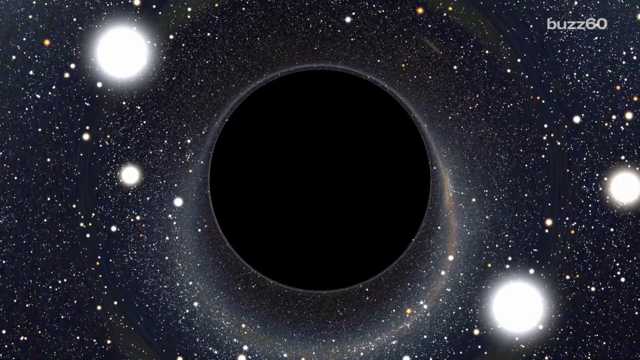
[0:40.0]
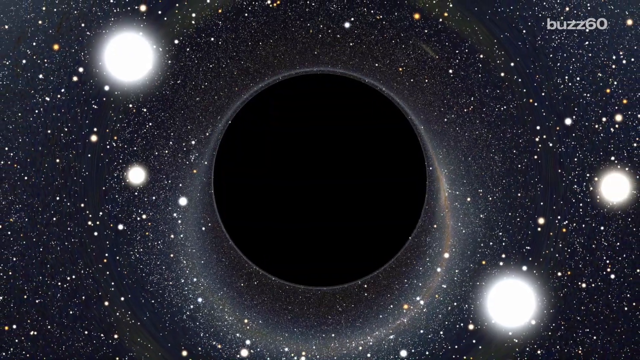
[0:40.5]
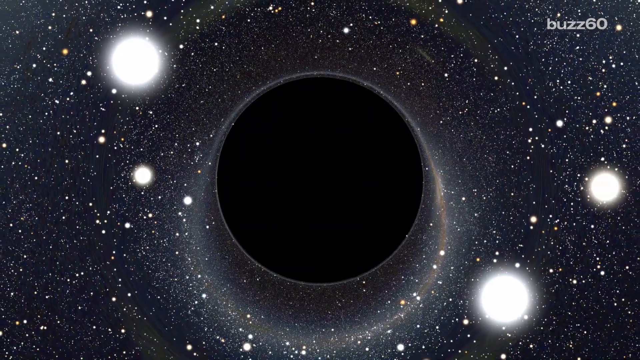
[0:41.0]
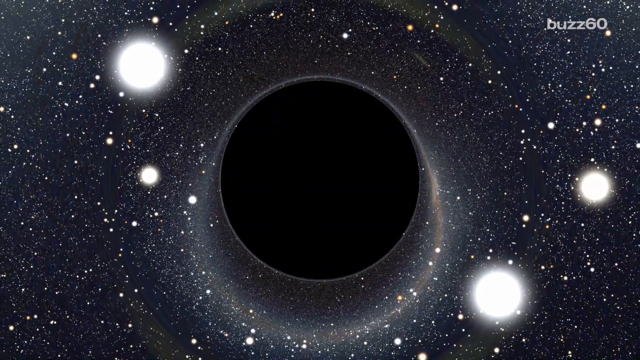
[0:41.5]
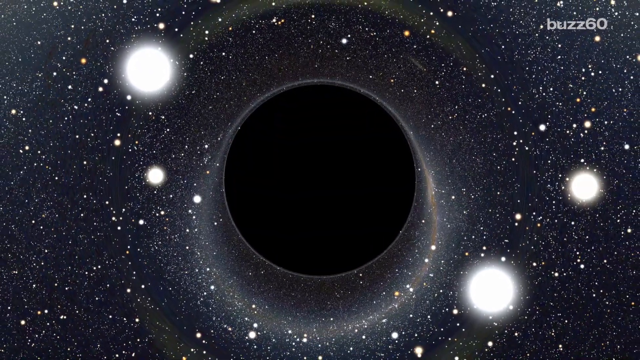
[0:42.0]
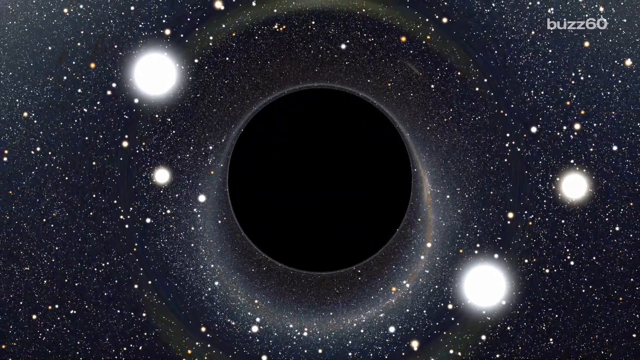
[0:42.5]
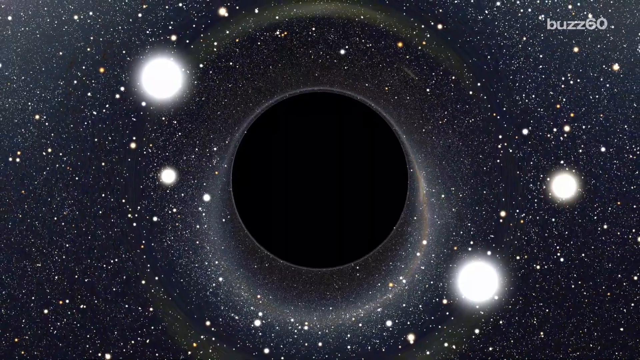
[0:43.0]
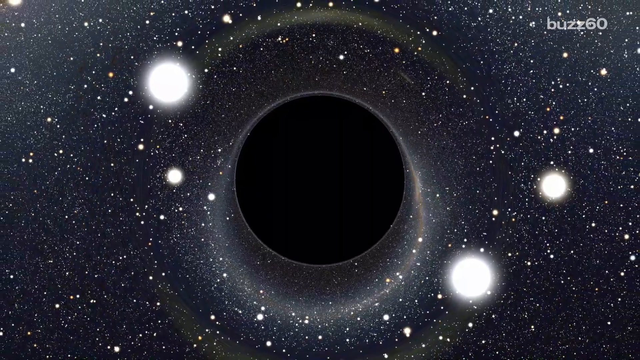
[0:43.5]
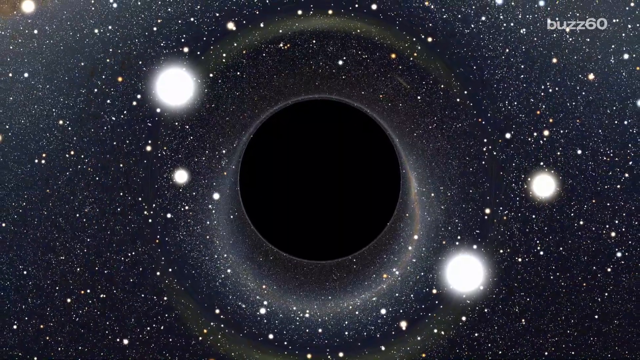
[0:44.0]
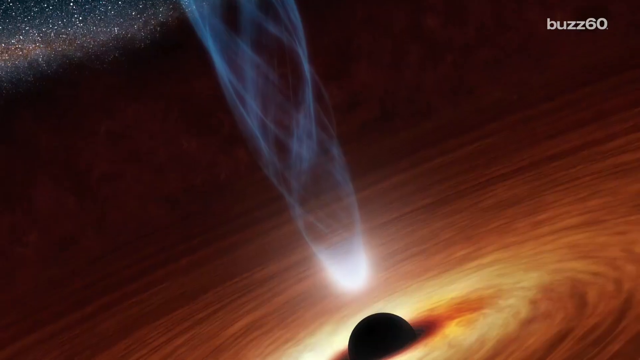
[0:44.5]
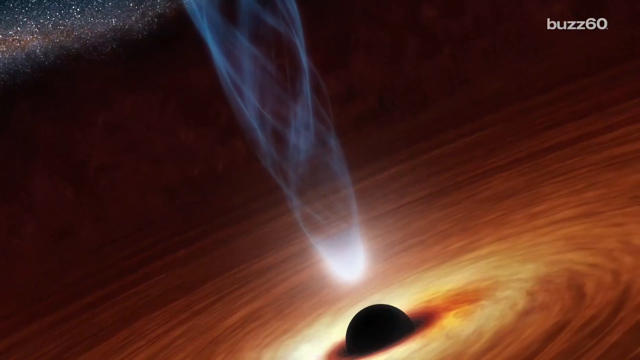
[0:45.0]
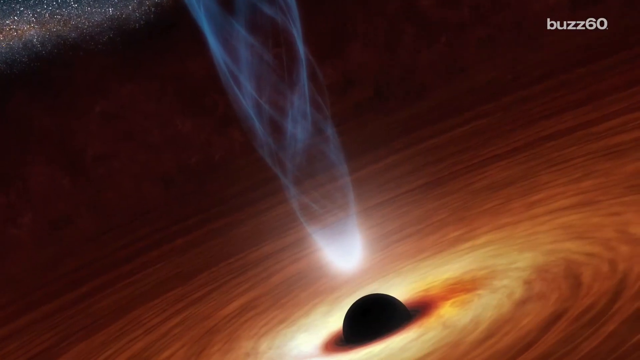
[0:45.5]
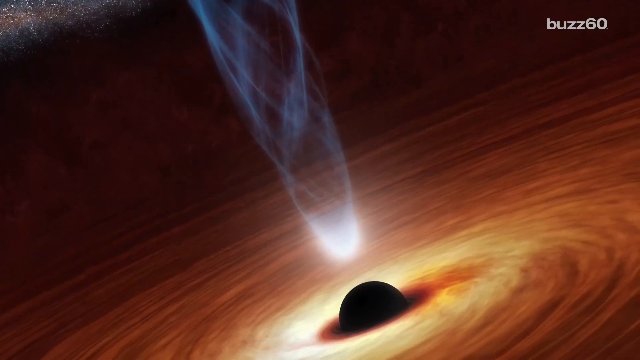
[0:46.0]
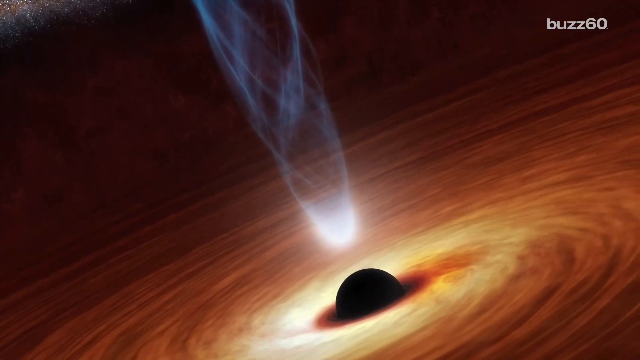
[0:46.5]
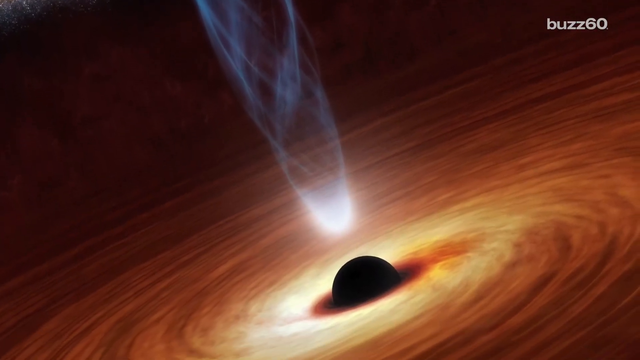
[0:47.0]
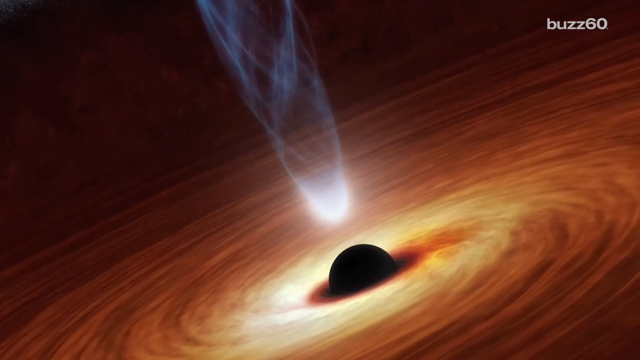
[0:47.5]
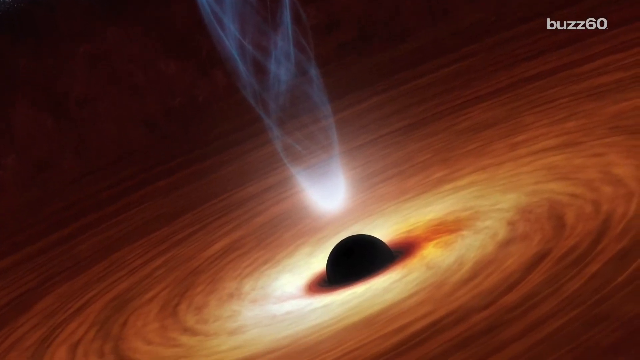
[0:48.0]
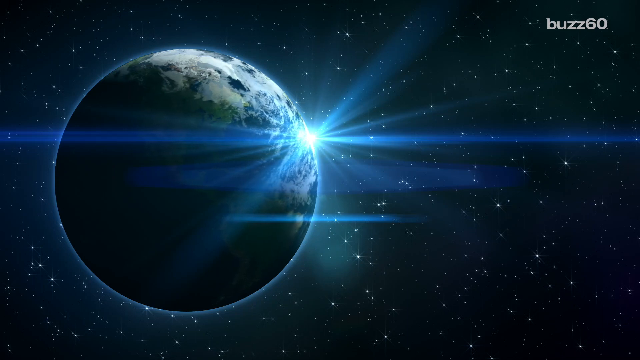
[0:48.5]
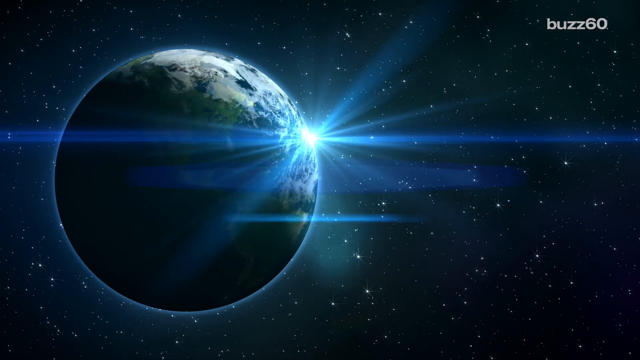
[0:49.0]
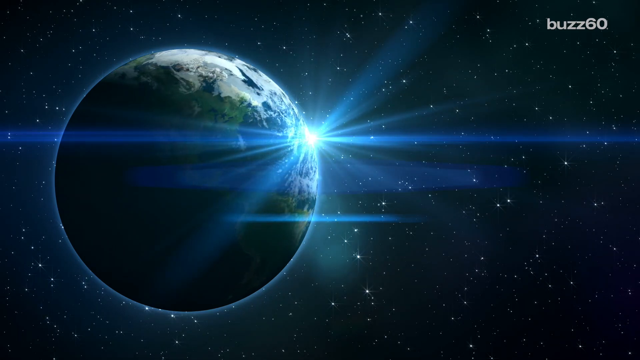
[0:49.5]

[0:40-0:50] The camera continues to zoom back from the shot of space with the perfect black circle in the middle of the screen and stars around it, including some large stars. A cut leads to what appears to be an illustration of a black hole, with the camera slowly panning down and to the right. It shows a black orb at the bottom middle of the screen surrounded by circling clouds swirling yellow and becoming more red the further they are from the central black orb. The plane of the phenomenon is angled from bottom left to upper right. White energy comes in from the top of the screen directly towards the black orb. The video then cuts to an animated shot in space showing the Earth rotating. The Earth occupies the left-hand side of the screen, and a bright light to the right of the Earth, just at its edge, creates a diffuse light, with blue lens flare spreading across the screen in various directions.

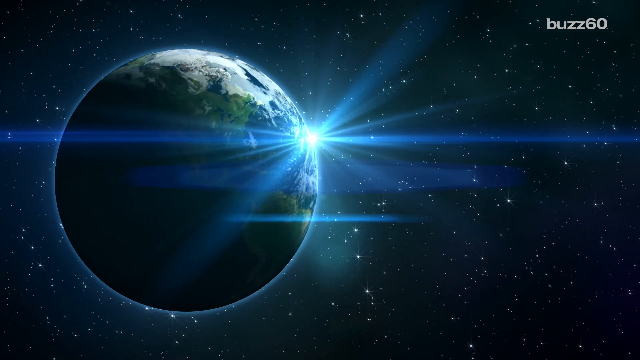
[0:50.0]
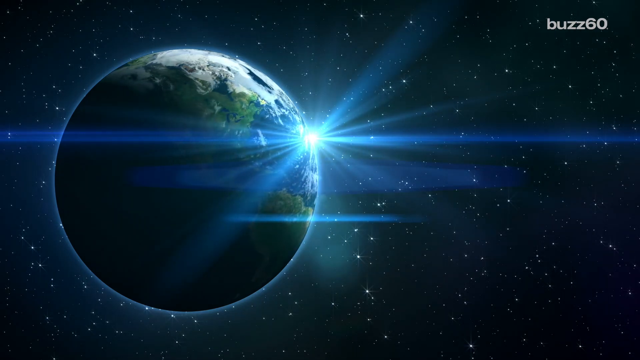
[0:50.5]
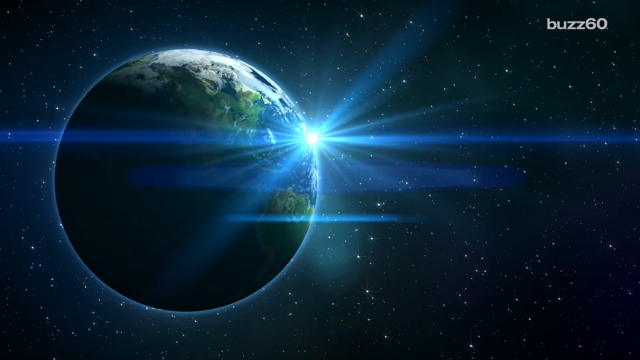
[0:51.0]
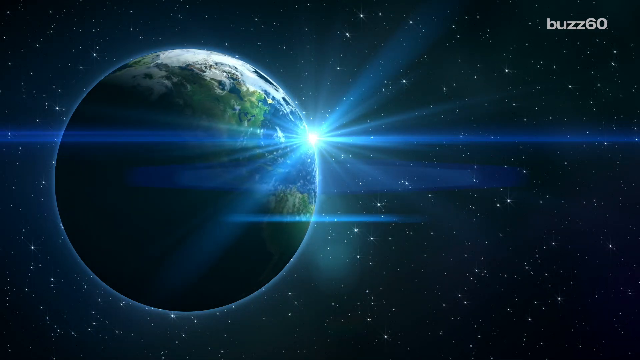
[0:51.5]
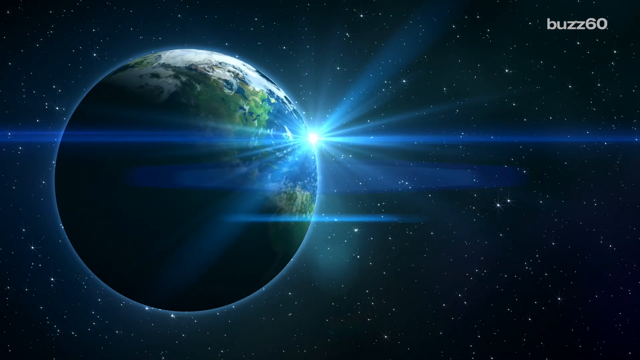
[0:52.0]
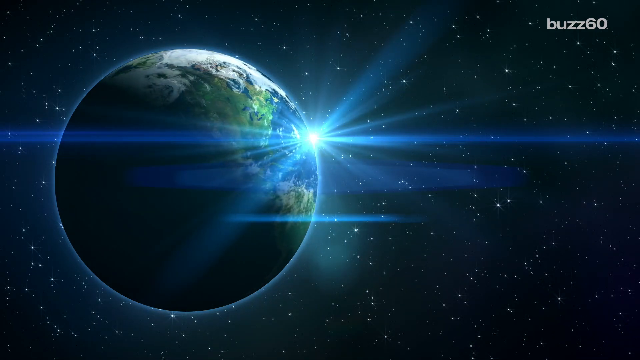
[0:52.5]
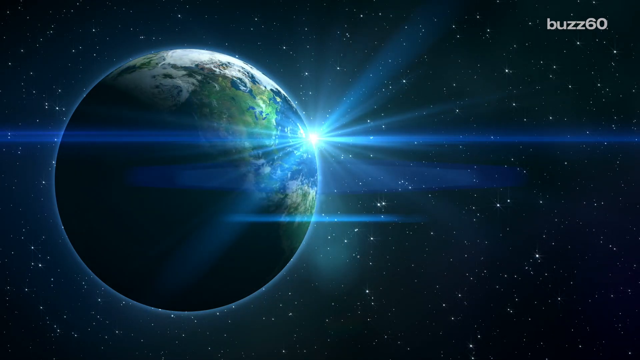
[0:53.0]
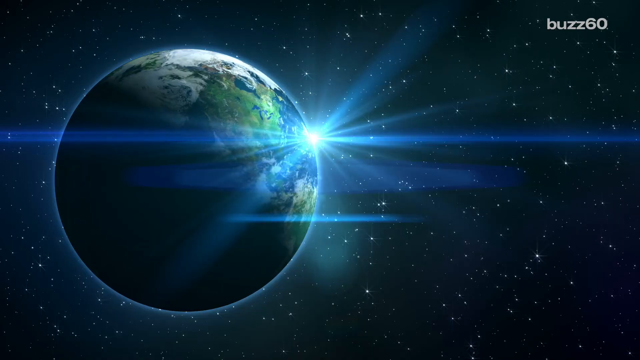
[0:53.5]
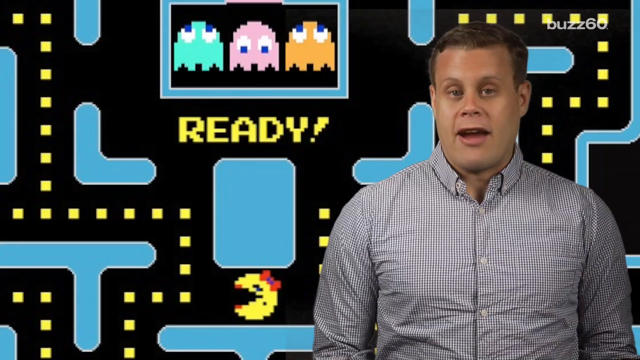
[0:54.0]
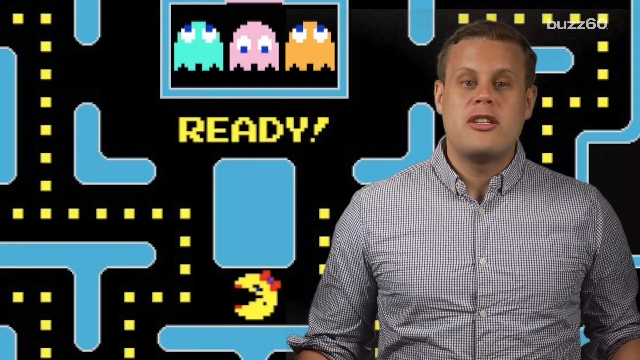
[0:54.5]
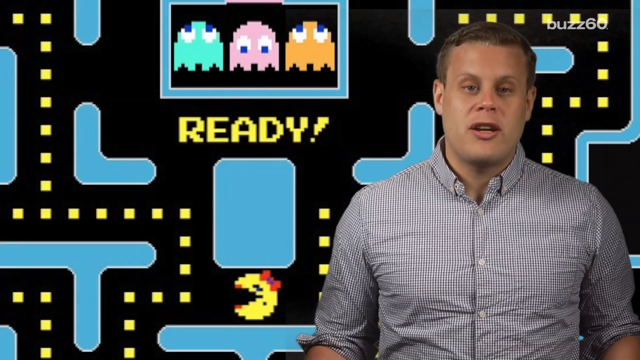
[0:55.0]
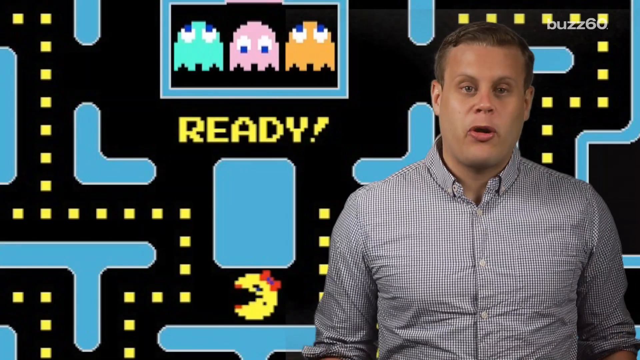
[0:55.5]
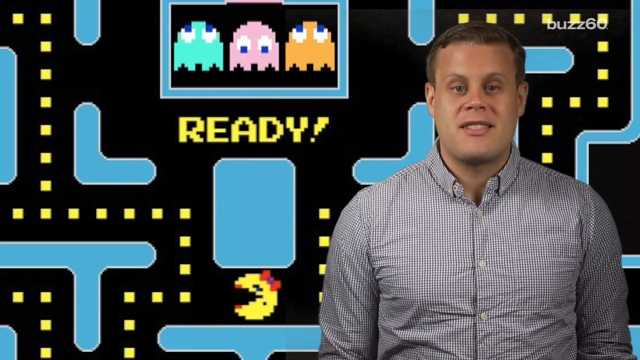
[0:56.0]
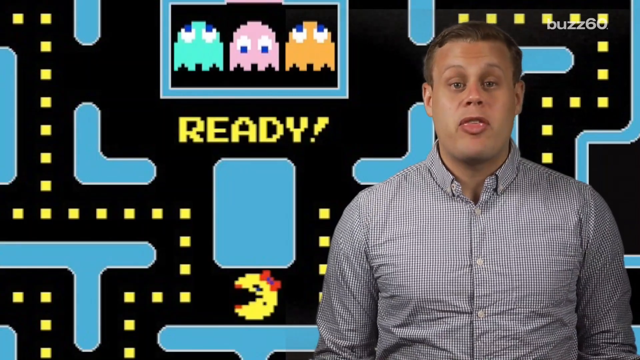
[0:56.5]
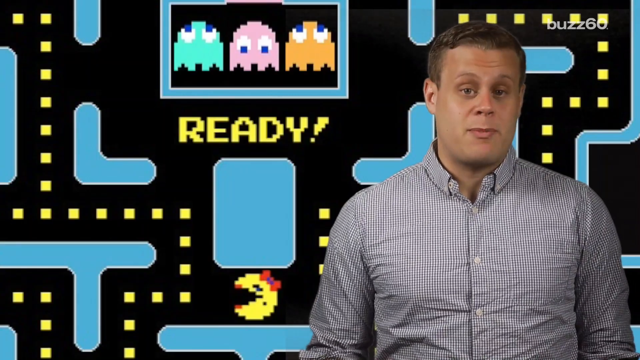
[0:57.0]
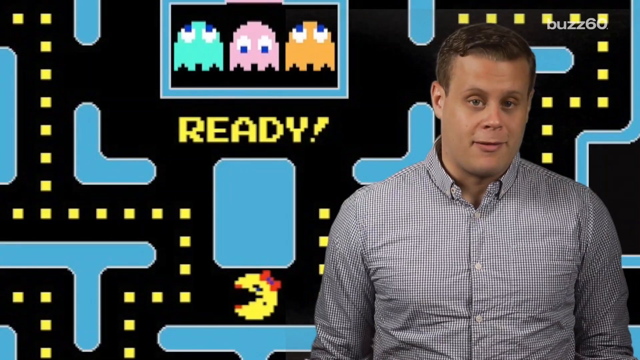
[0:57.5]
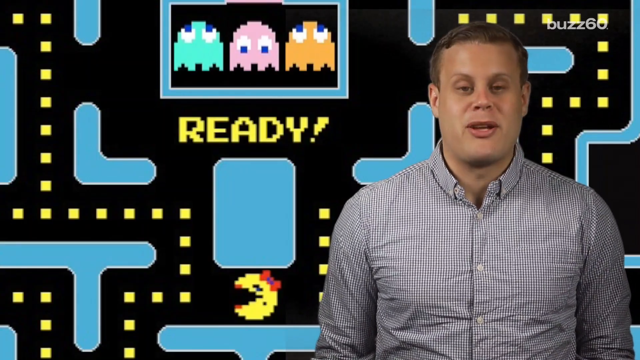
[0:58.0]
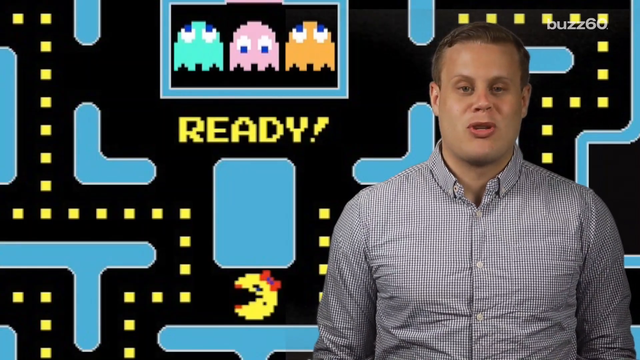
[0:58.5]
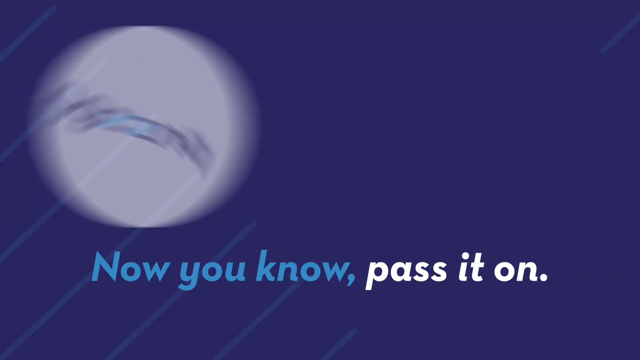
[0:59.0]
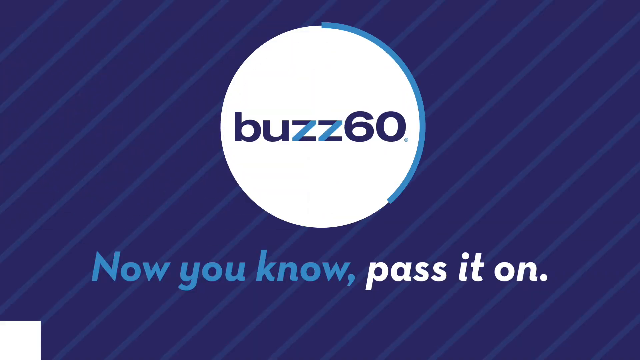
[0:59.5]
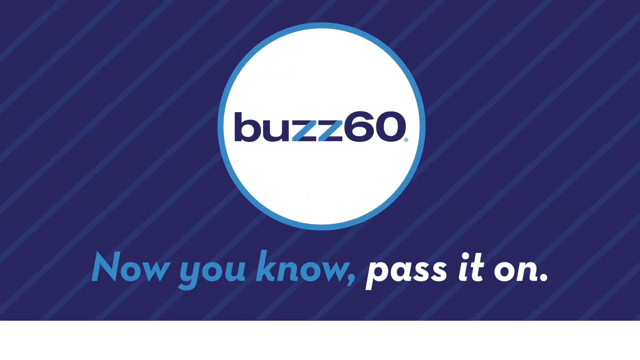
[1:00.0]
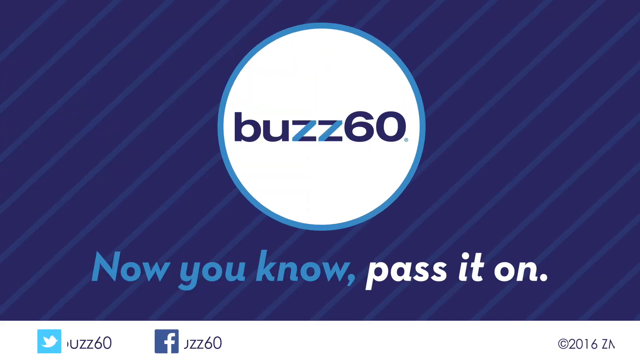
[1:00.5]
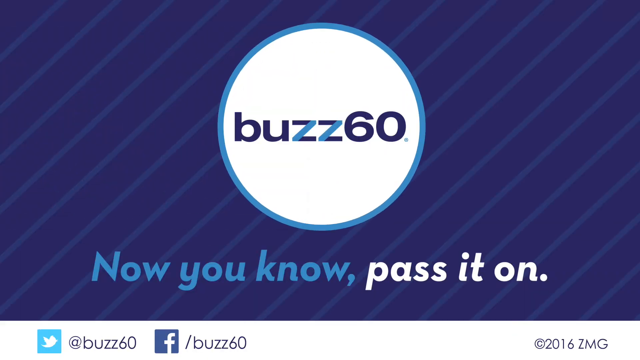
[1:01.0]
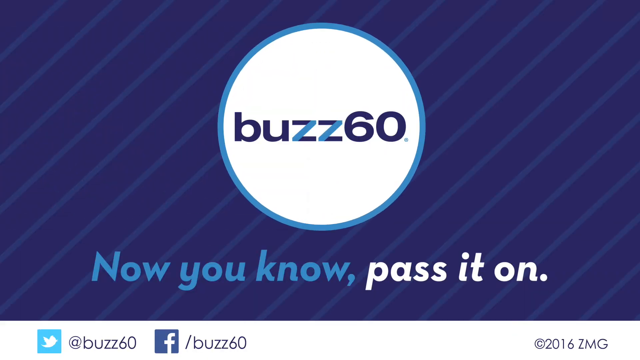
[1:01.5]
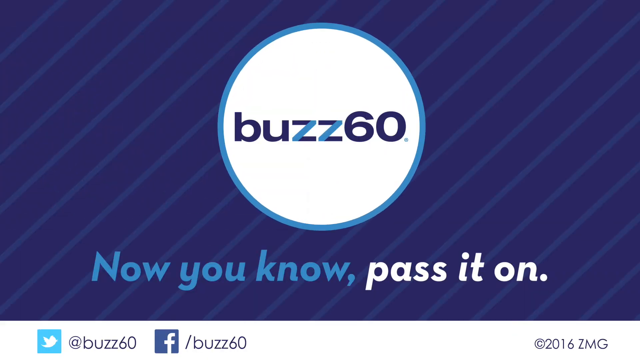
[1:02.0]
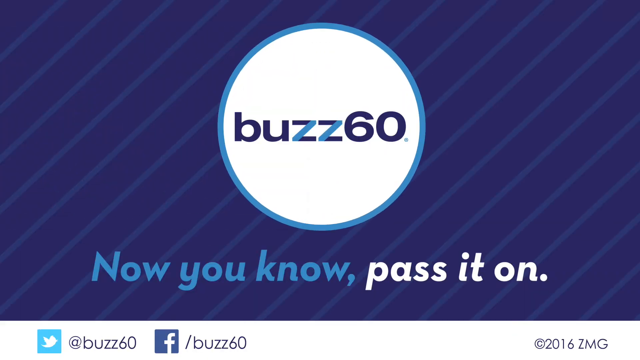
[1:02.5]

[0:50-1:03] The Earth continues rotating on the left-hand side of the screen. Its circumference is lit in light blue light, with a focal point of light in the upper right-hand side of the Earth creating blue lens flare that spreads across the screen. The video cuts to a white man with brown hair standing on the right-hand side of the screen, wearing a white shirt with thin black line checks. He stands against a green-screen background of the game Ms. Pac-Man, showing the blue outlines of the maze, the yellow dots, Ms. Pac-Man herself in the bottom middle, and in the top middle the three ghosts in light green, light pink and light orange, with "Ready" written in yellow beneath that box. The man speaks to the camera before a cut to a blue screen with regular lighter purple lines running at angles from bottom left to upper right across the screen. In the centre is a white circle with "Buzz 60" written on it, and an animation draws a blue outline around the circle, starting at the 12 o'clock position and moving clockwise. Beneath the circle, text says "Now you know" in blue and then "pass it on" in white. At the bottom of the screen is a horizontal white bar: on its left are the Twitter logo box with "@Buzz60" written in purple next to it, then the Facebook icon and "/Buzz60"; on its right is "©2016ZMG".